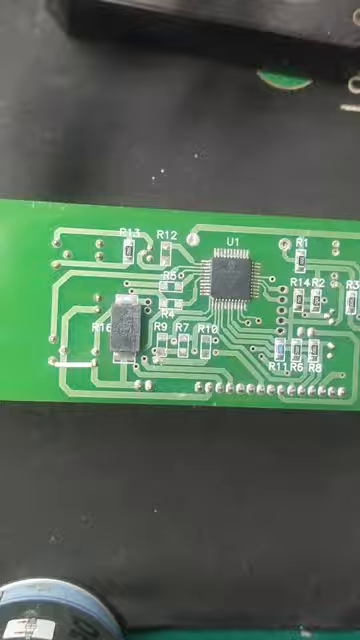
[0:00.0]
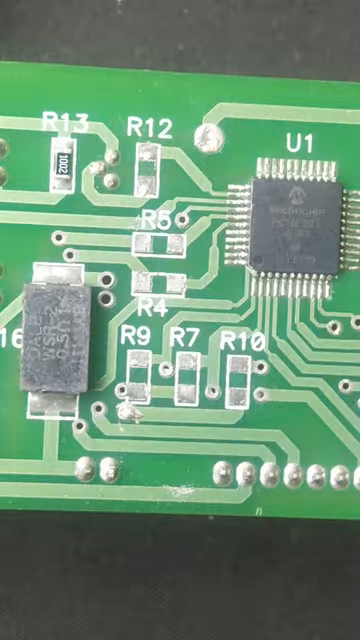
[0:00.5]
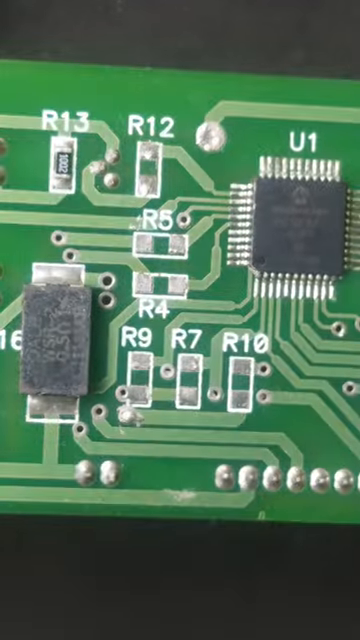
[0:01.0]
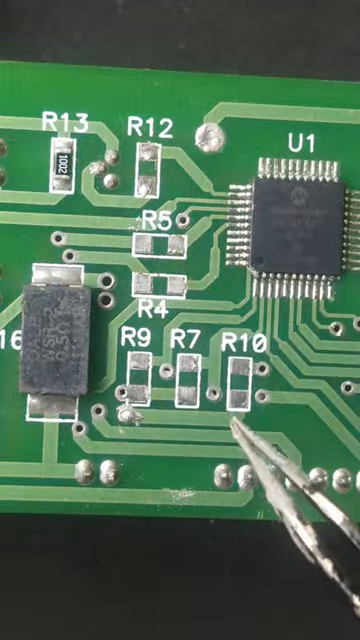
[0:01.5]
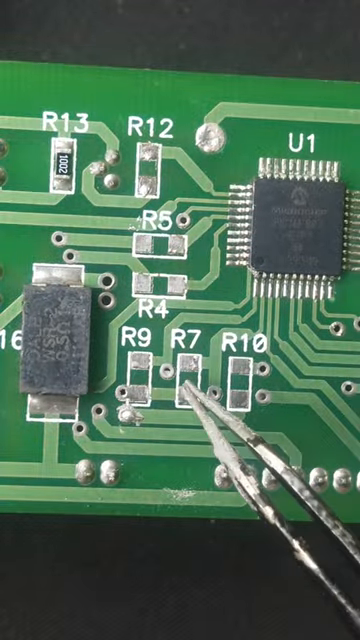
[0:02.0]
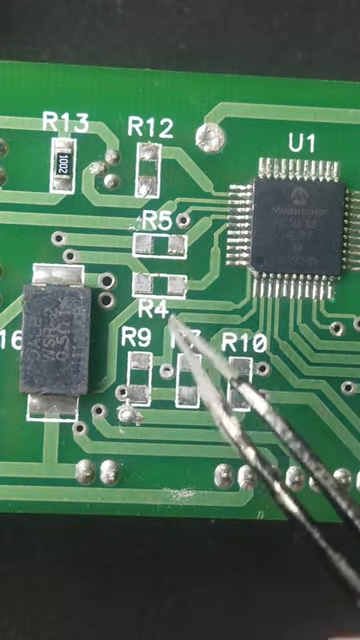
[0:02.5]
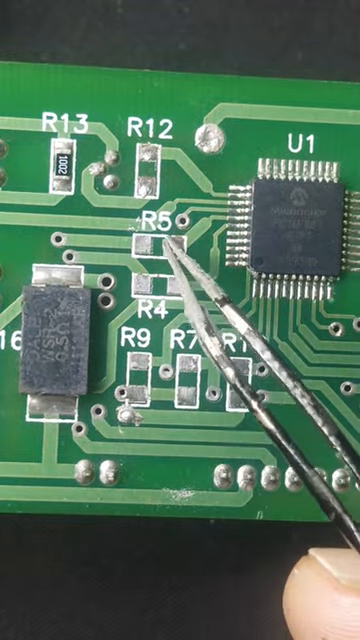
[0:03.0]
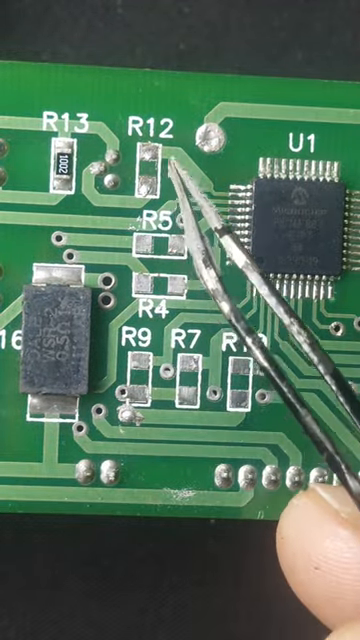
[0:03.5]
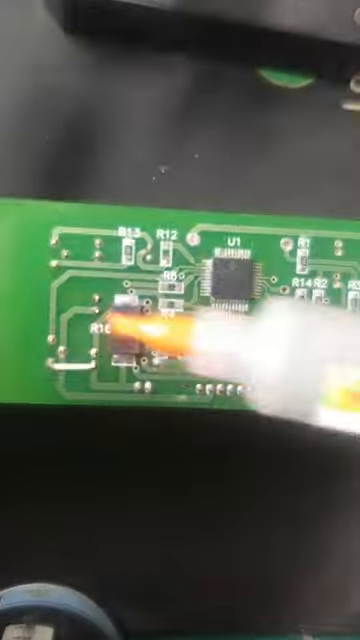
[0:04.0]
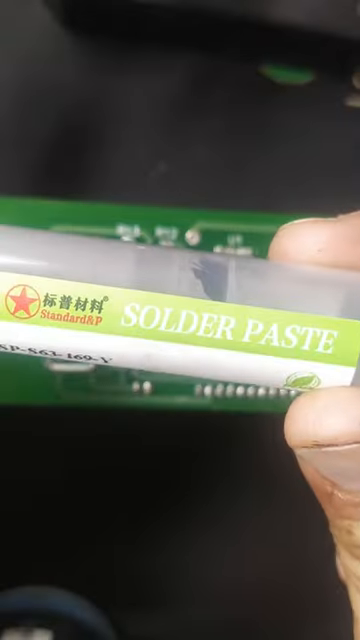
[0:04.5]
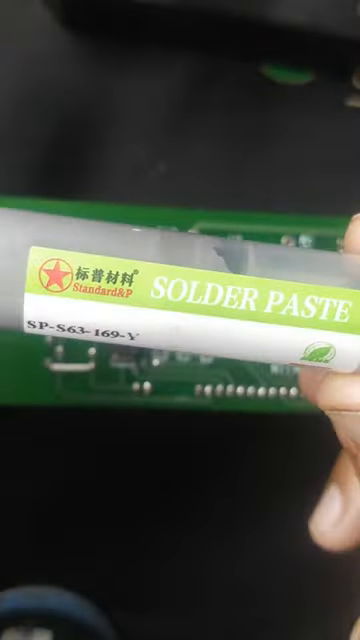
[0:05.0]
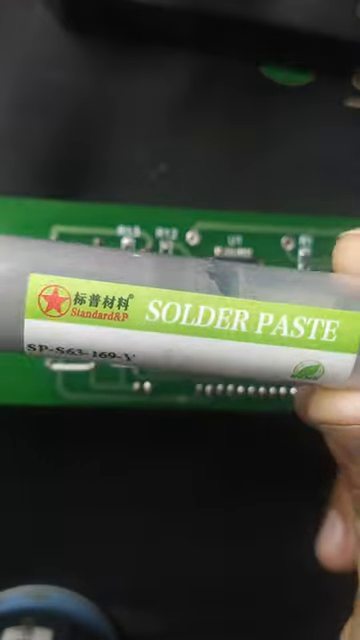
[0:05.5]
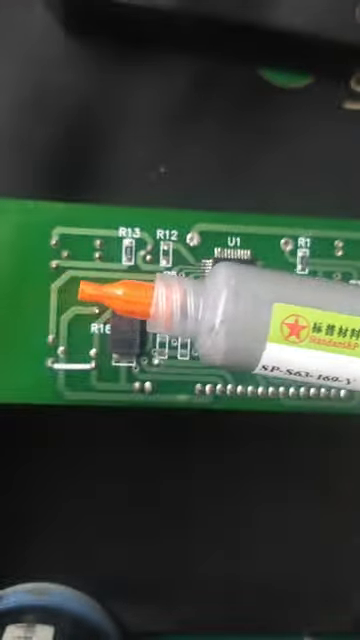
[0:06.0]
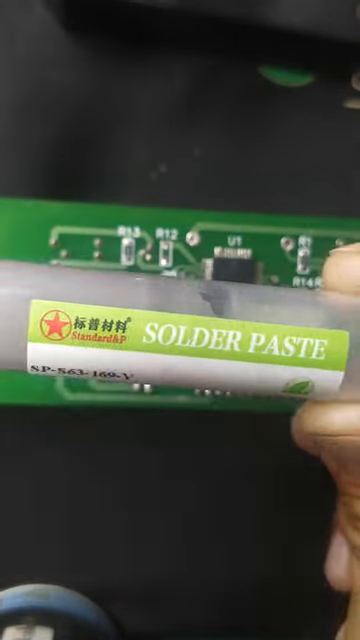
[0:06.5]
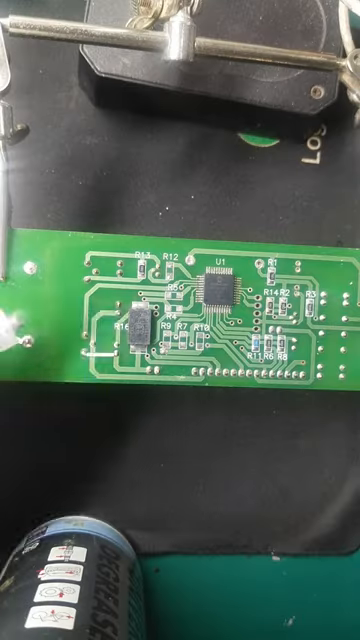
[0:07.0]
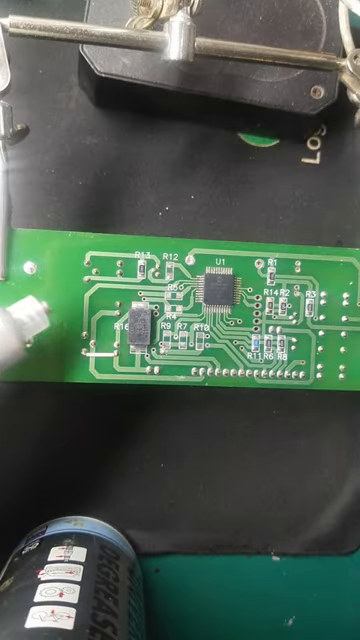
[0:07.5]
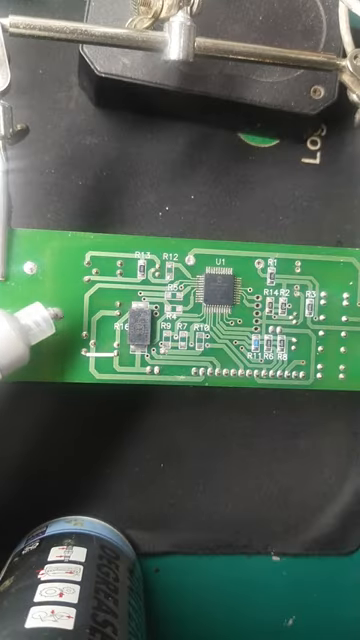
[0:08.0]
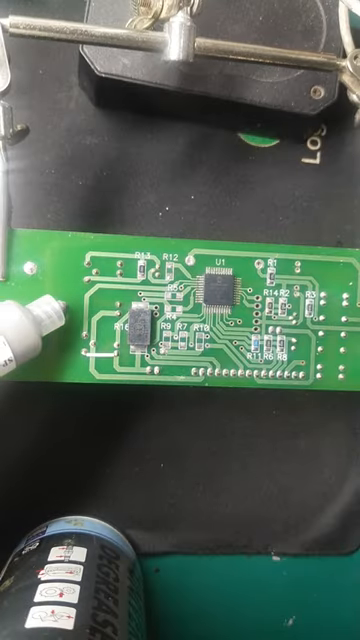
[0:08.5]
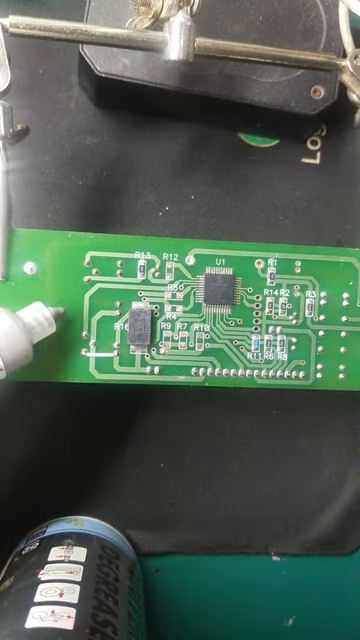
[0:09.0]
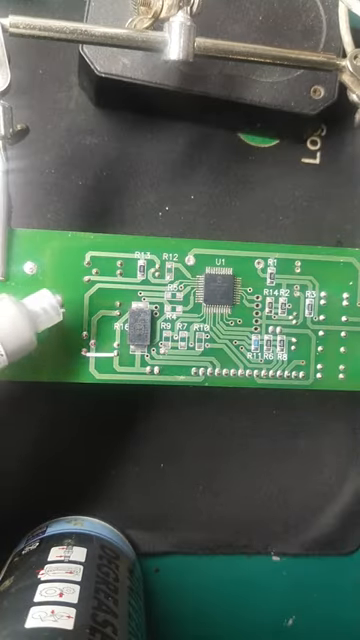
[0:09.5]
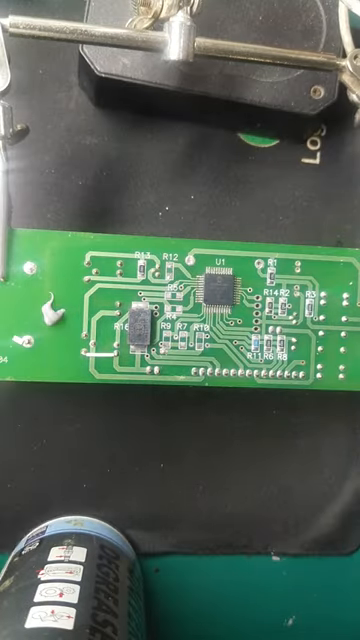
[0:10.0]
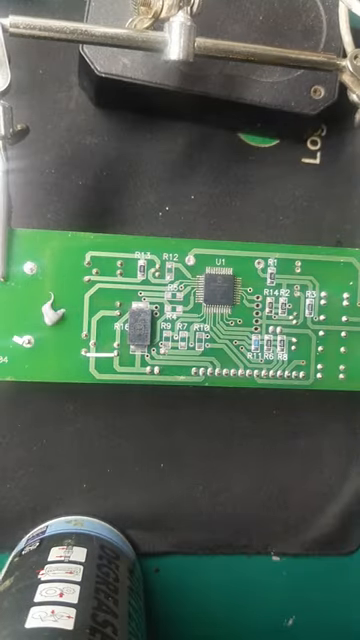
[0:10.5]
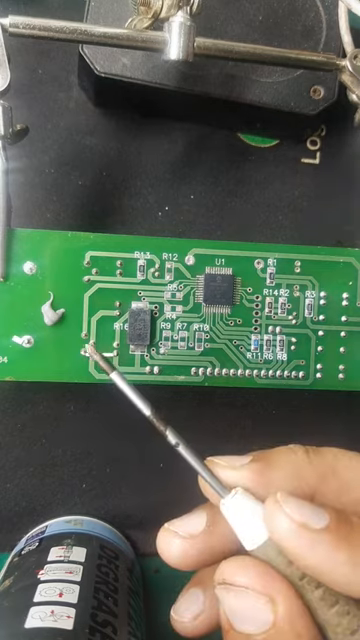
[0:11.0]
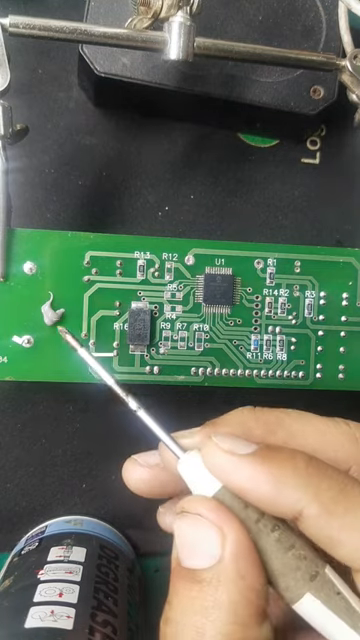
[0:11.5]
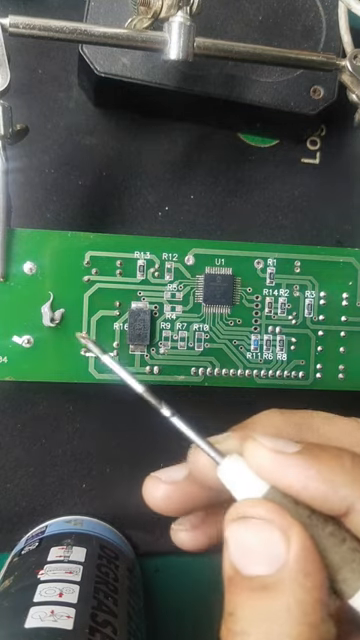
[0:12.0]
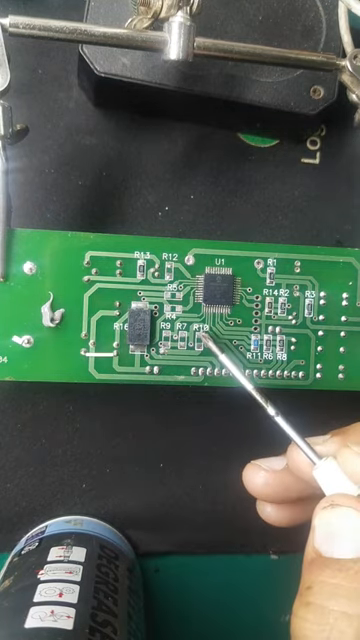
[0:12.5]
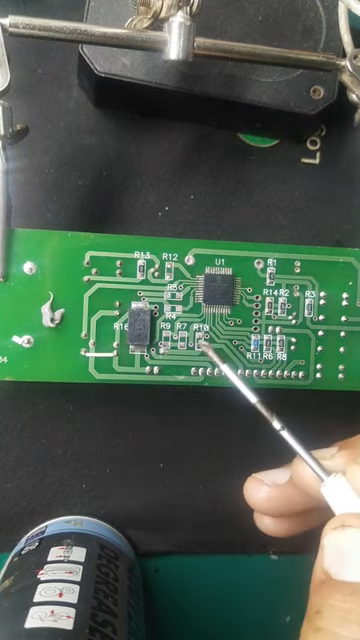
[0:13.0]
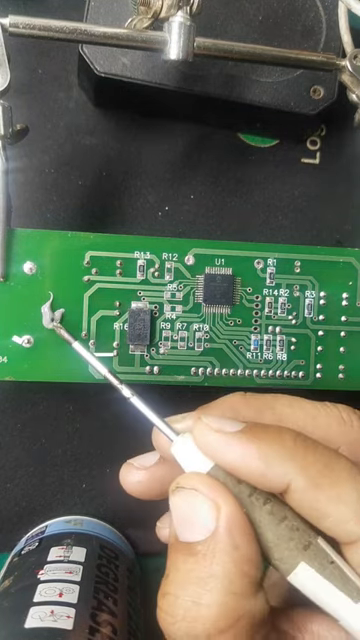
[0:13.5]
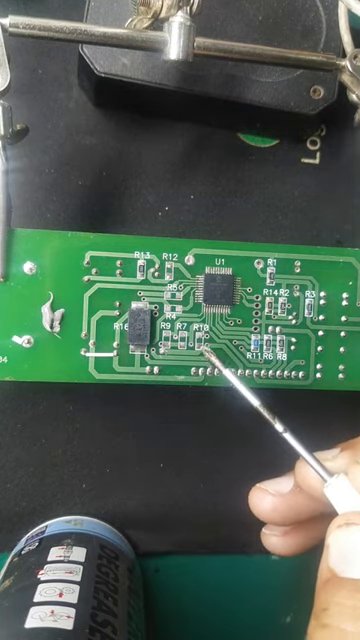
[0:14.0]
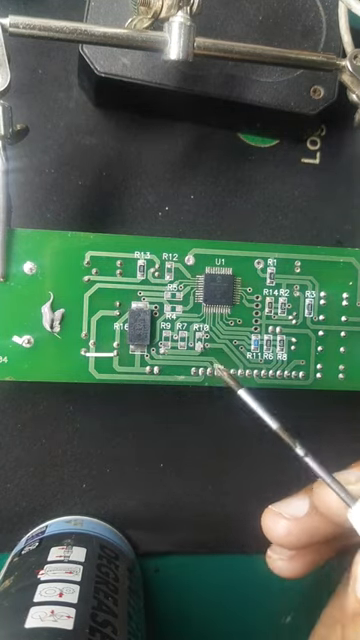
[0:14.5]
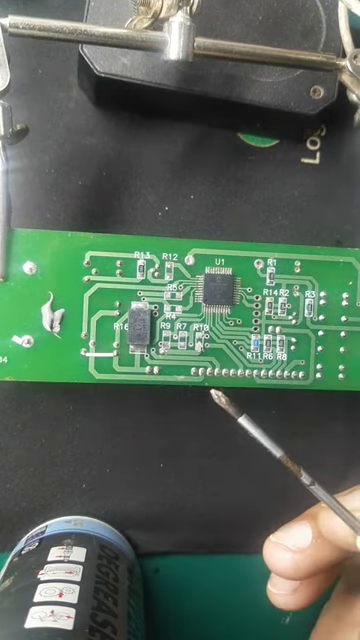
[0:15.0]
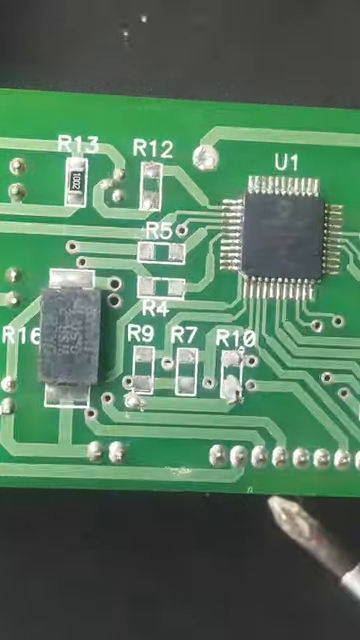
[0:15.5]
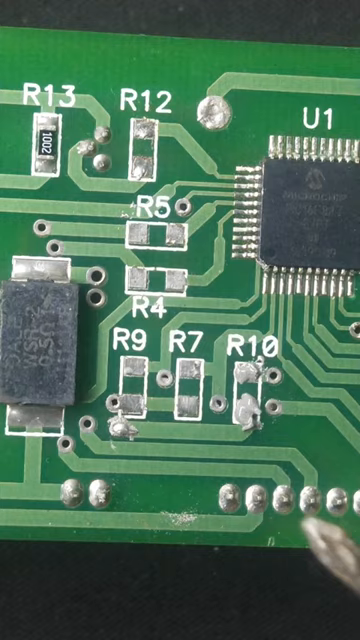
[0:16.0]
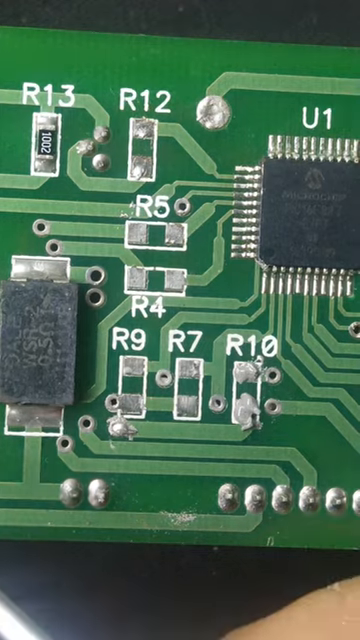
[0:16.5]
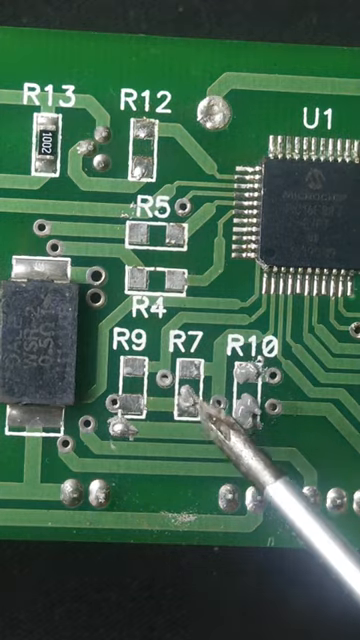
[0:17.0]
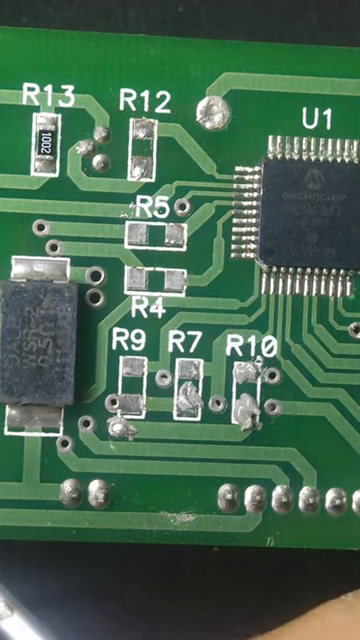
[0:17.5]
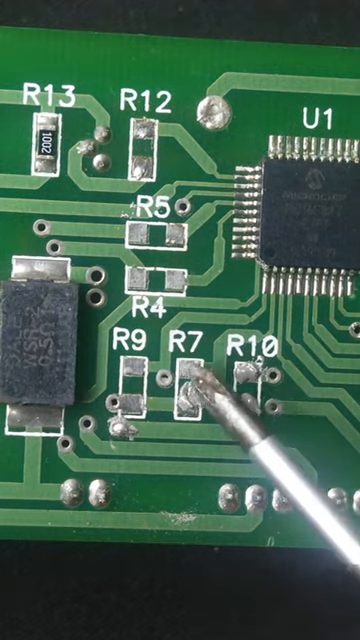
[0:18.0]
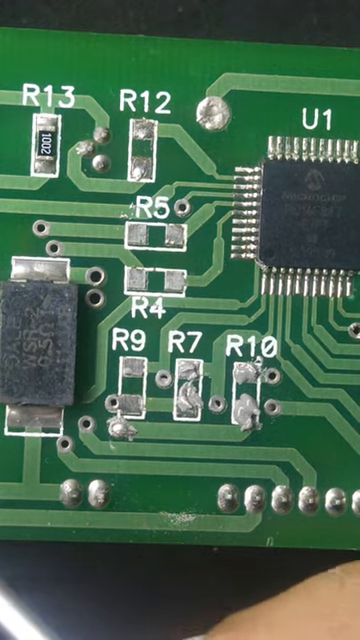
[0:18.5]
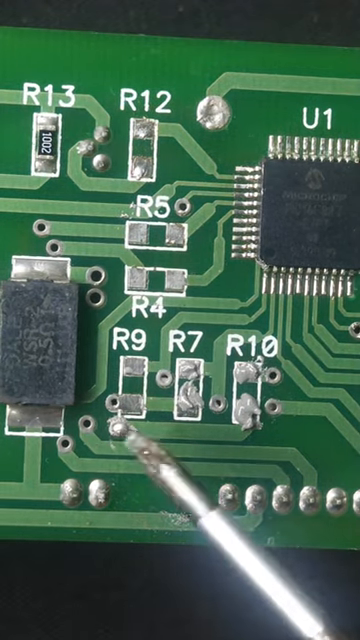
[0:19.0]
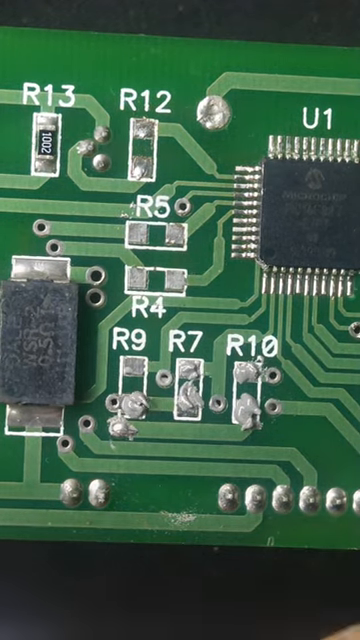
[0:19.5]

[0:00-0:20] An individual records what appears to be the soldering of an SMD panel. The hands and fingers appear to be male. He uses a solder paste to solder some kind of object to the inputs and outputs. The paste looks very thick, and he applies a little at a time to the board, which is labeled R9, R7, R10. He also appears to have a pair of tweezers that he uses for application.